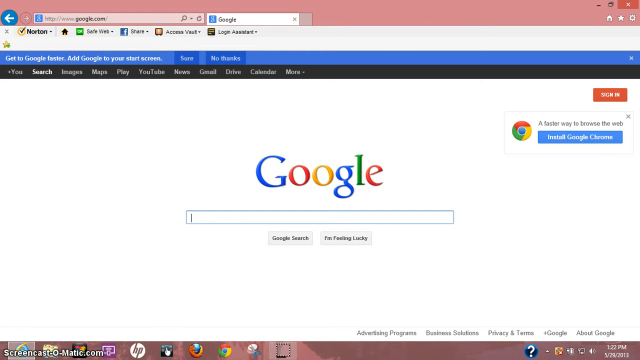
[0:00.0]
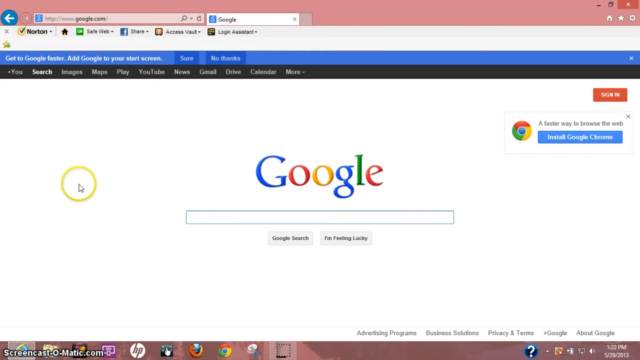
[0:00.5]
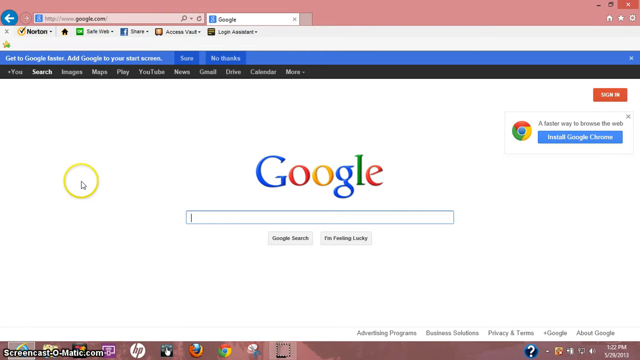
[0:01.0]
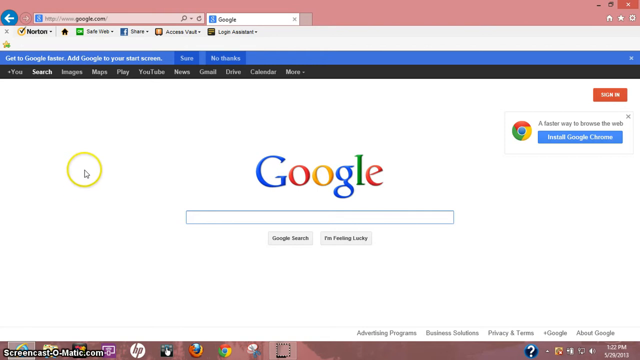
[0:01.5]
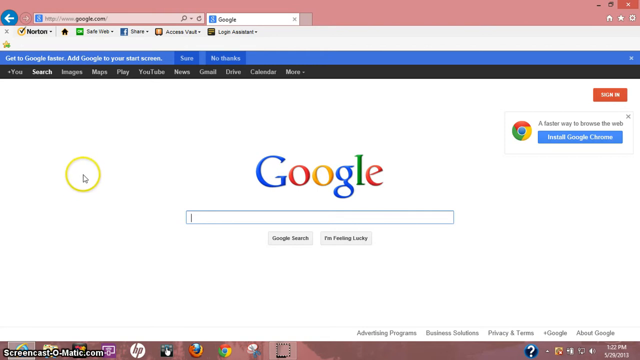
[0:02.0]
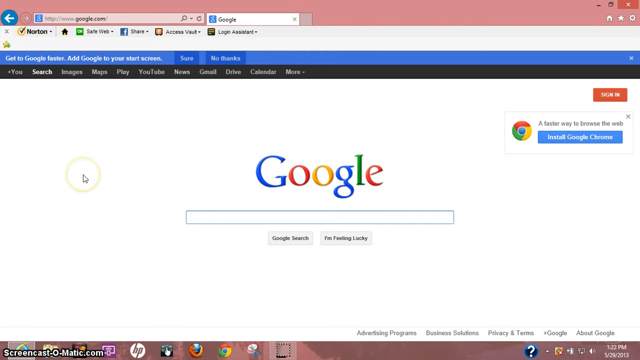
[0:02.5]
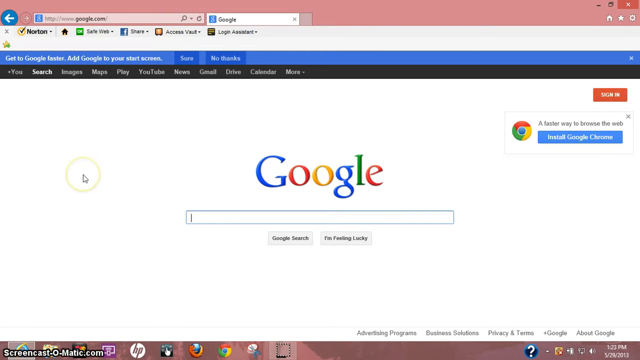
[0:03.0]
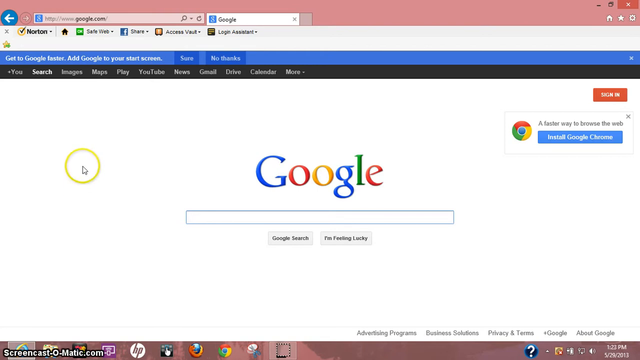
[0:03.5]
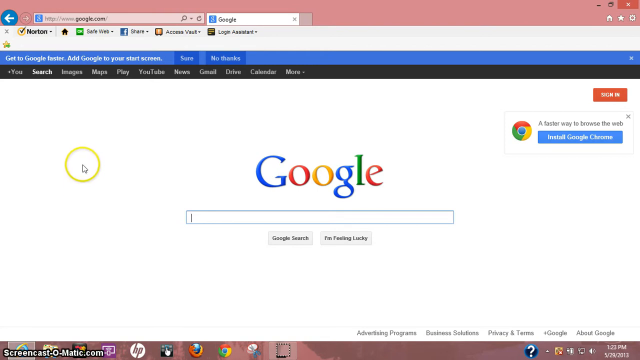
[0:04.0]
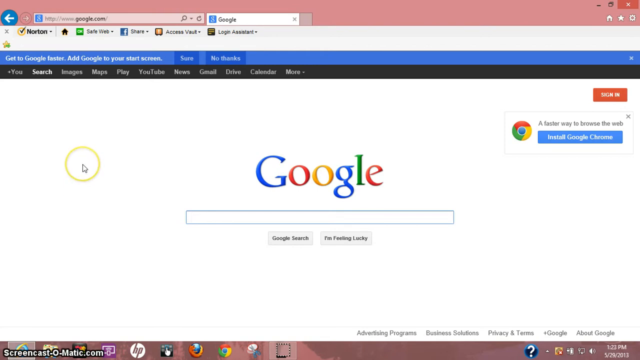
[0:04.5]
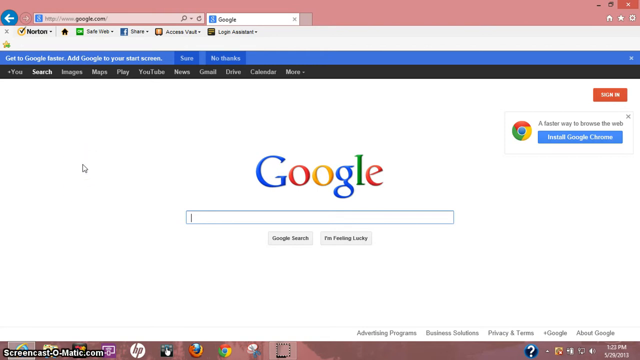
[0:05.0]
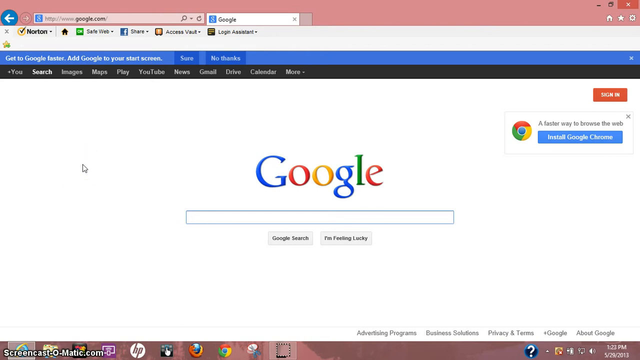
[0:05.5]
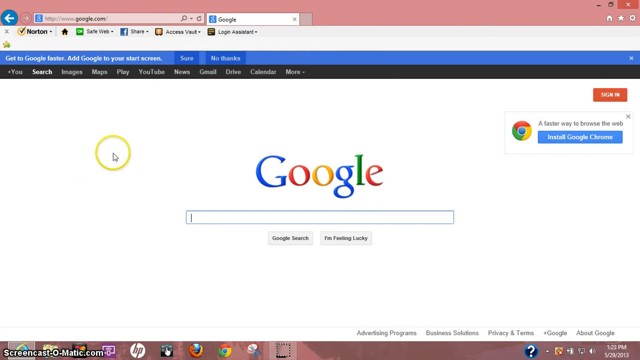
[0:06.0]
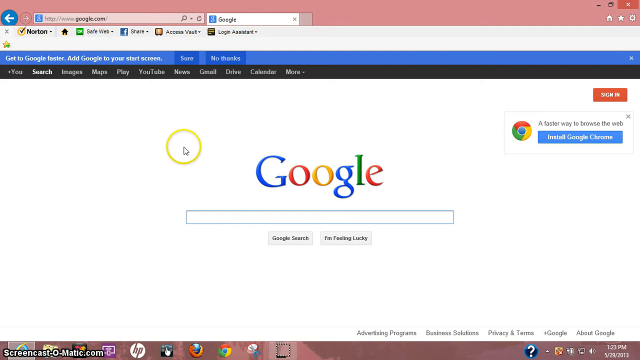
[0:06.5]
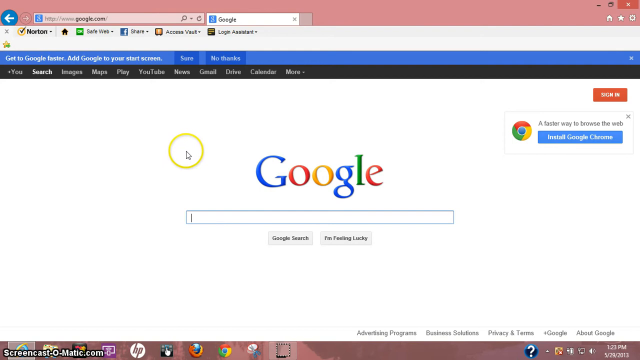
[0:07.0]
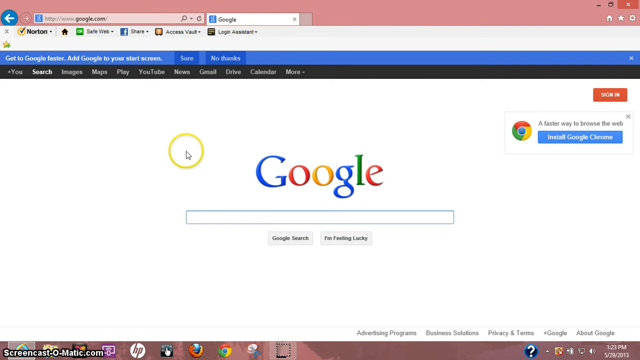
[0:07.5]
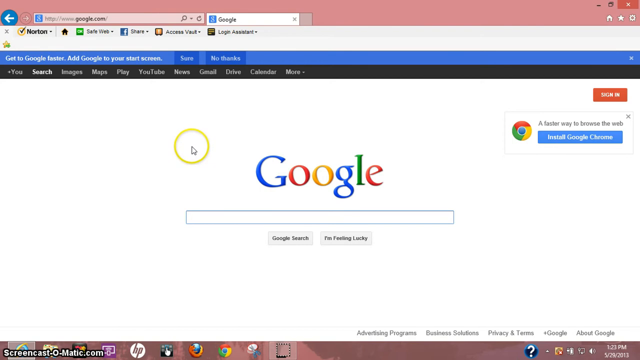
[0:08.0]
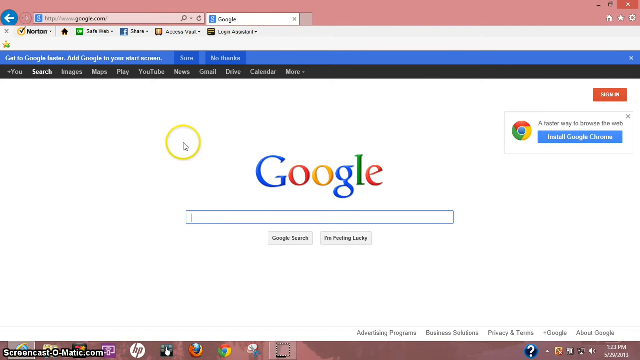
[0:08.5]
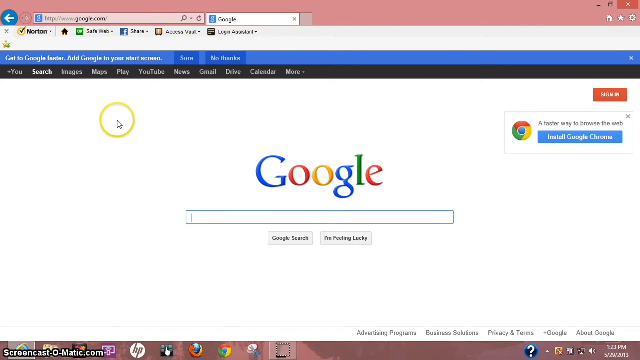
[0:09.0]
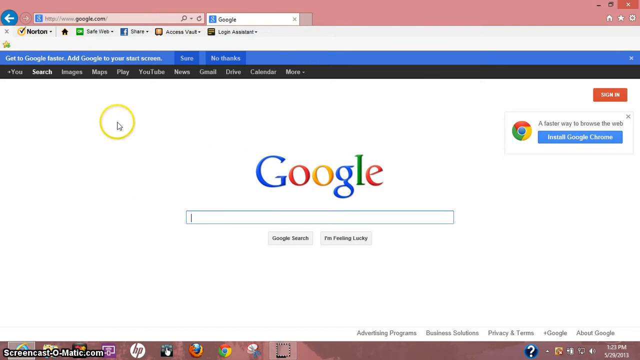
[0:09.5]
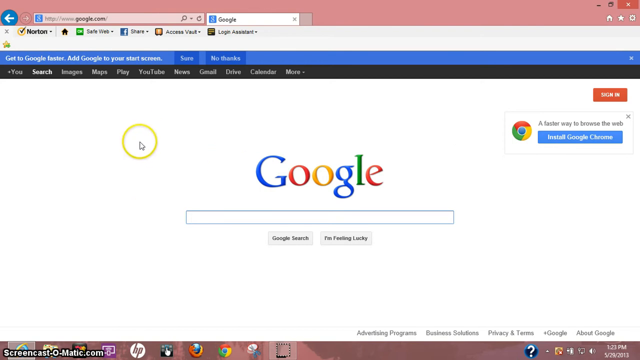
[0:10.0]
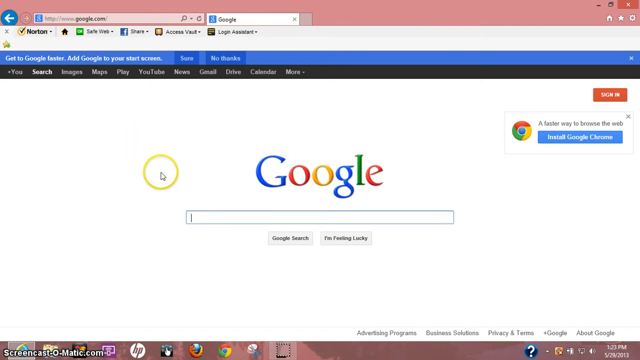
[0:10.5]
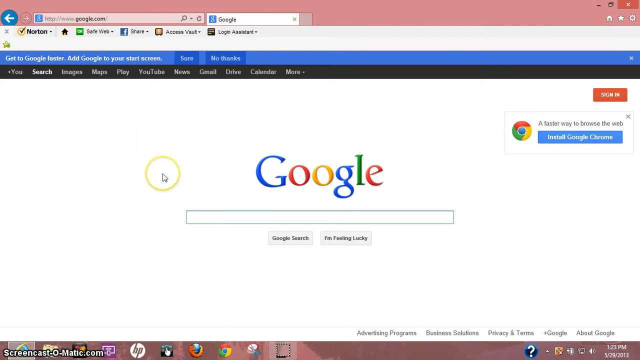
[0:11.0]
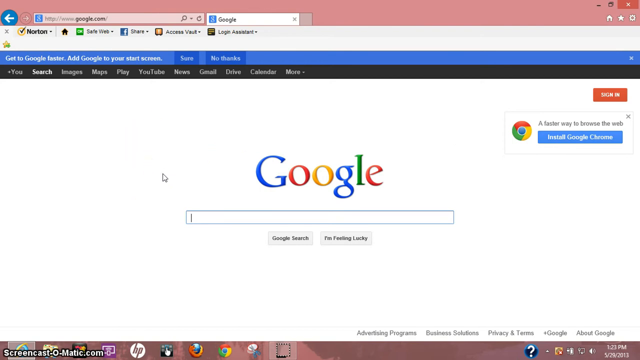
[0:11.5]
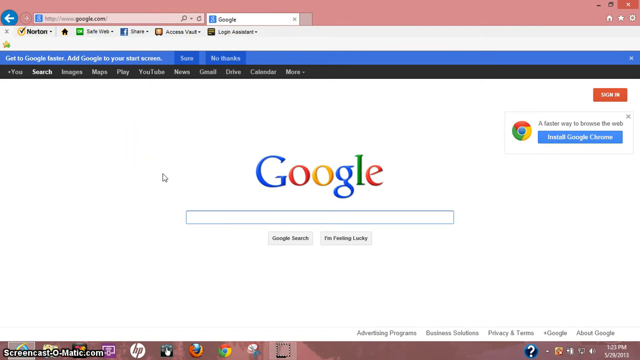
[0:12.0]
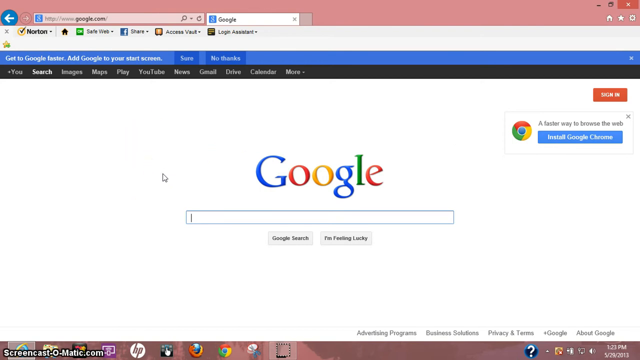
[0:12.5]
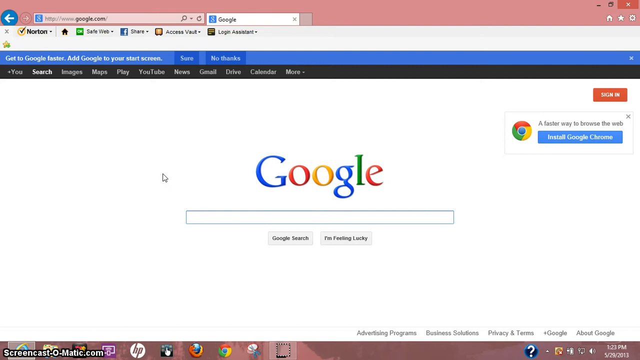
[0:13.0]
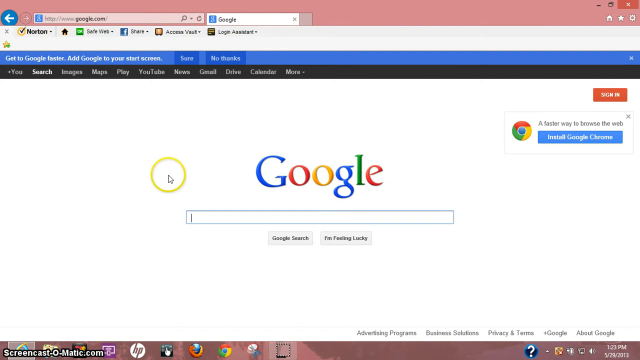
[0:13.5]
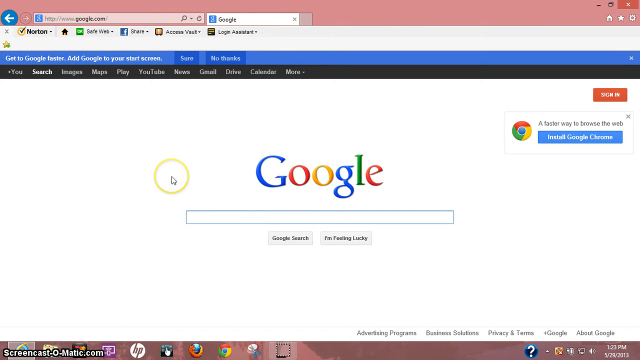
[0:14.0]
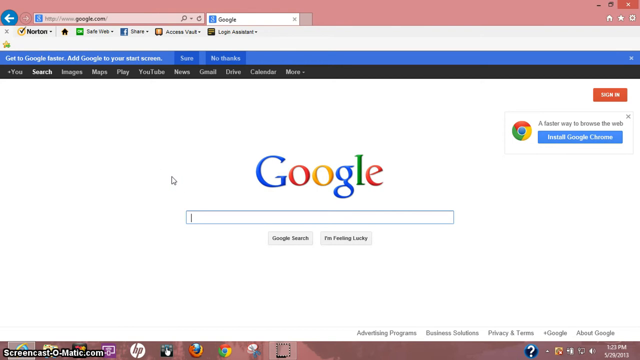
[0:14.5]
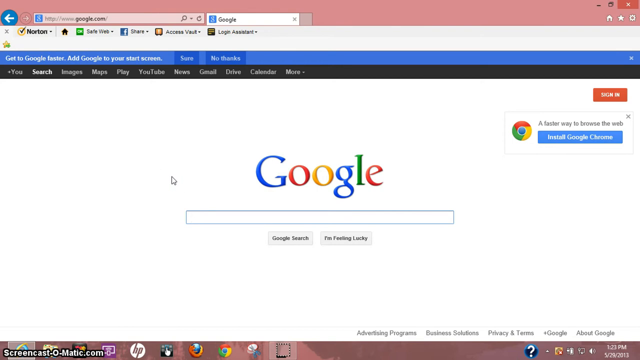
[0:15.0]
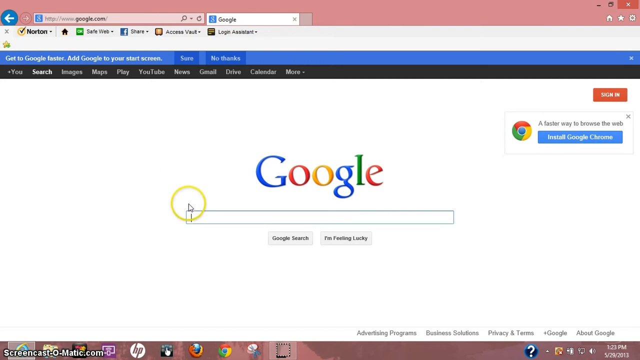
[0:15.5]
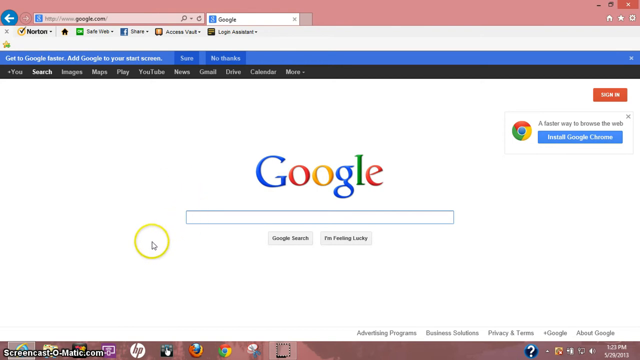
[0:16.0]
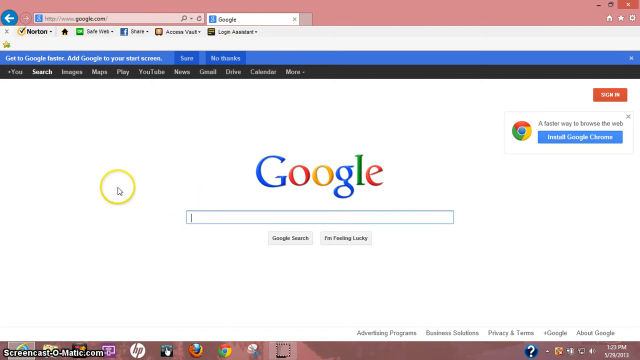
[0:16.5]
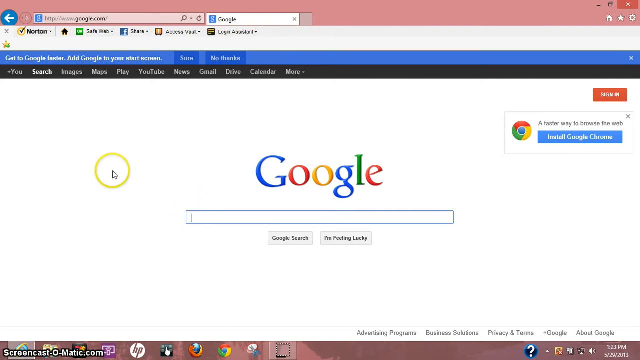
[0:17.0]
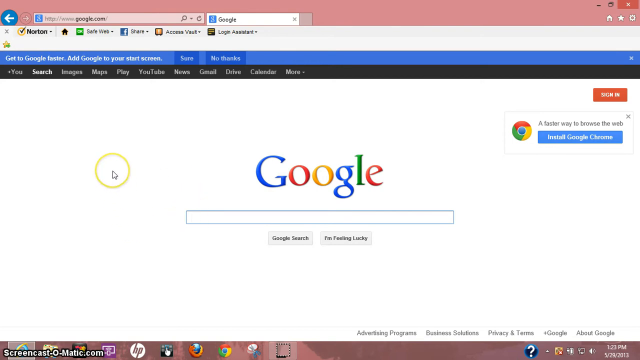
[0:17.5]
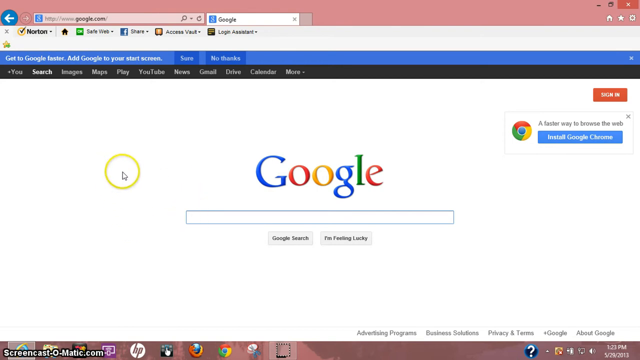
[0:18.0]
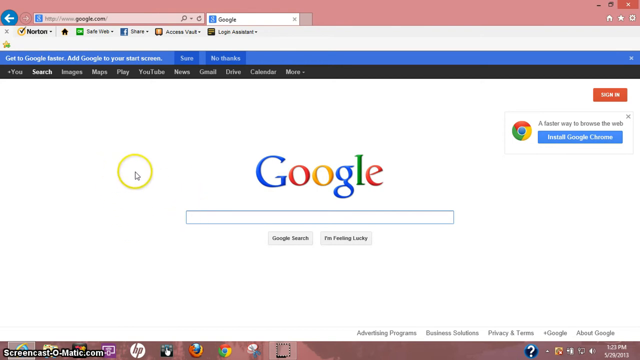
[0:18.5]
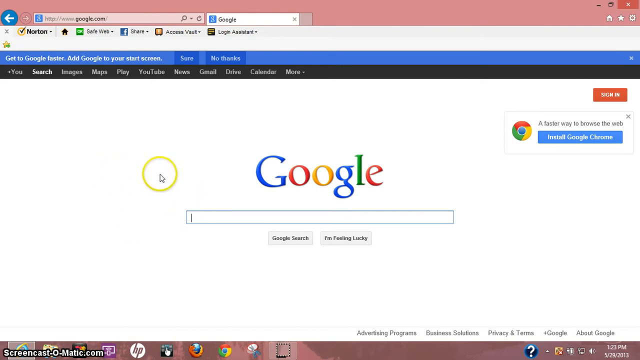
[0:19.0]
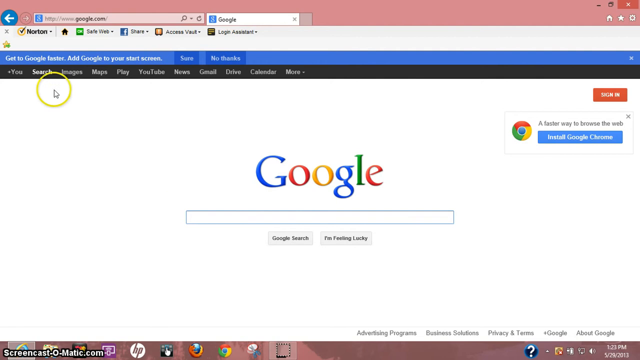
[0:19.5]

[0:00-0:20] The video begins on a Google search screen showing the Google logo and a search bar with the mouse cursor inside it. Below are two rectangular buttons reading "Google search" and "I'm feeling lucky". Some menu items are at the top, and only the top of the browser is visible, with a back button and a blue bar that says "get to Google faster, add Google to your start screen". The screen holds for a moment, then a pointer cursor with a yellow circle around it appears on the left side of the screen. It moves up a little, and the yellow circle disappears and reappears. The cursor moves slightly right, then left, then down a little, while the yellow circle keeps disappearing and reappearing, blinking around the cursor to draw attention to it. The cursor moves in a small circle and then goes up to the upper left corner of the screen.